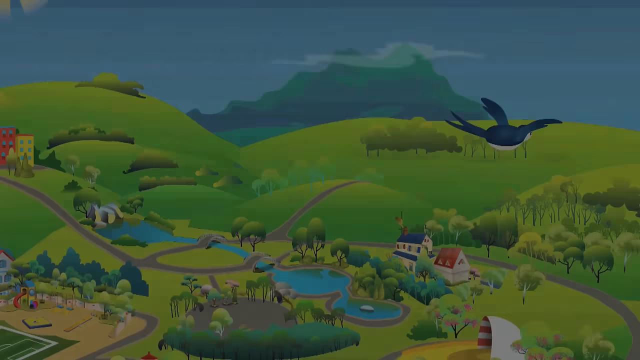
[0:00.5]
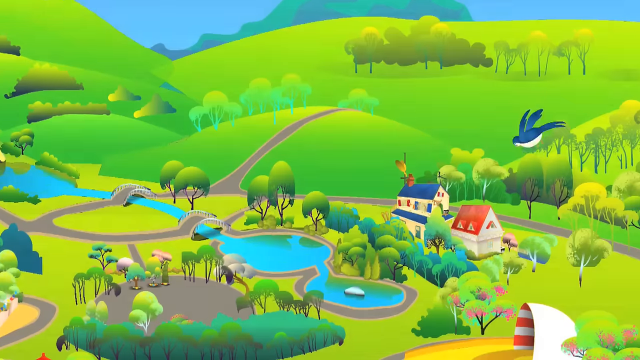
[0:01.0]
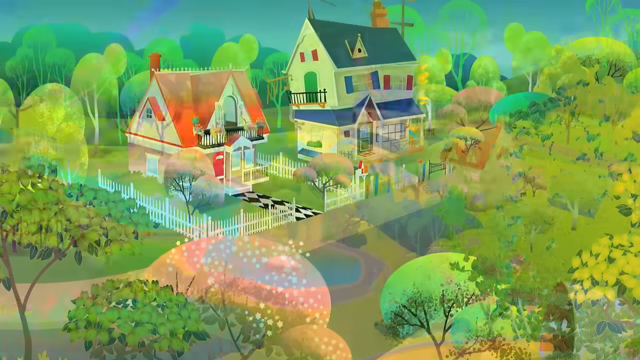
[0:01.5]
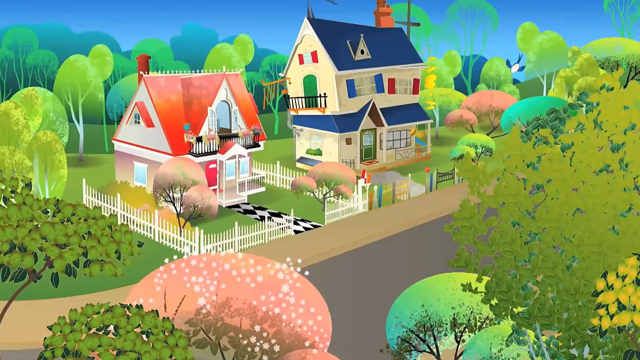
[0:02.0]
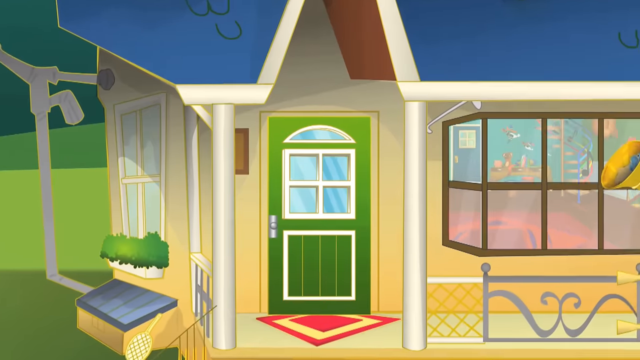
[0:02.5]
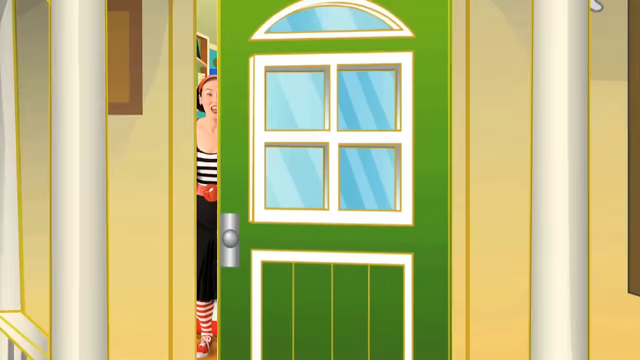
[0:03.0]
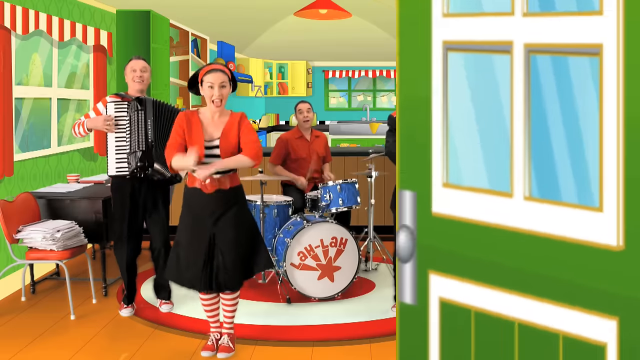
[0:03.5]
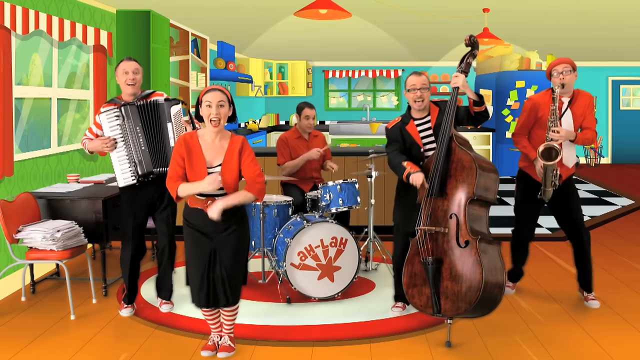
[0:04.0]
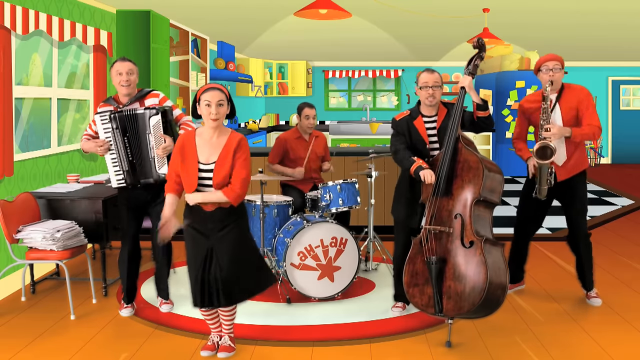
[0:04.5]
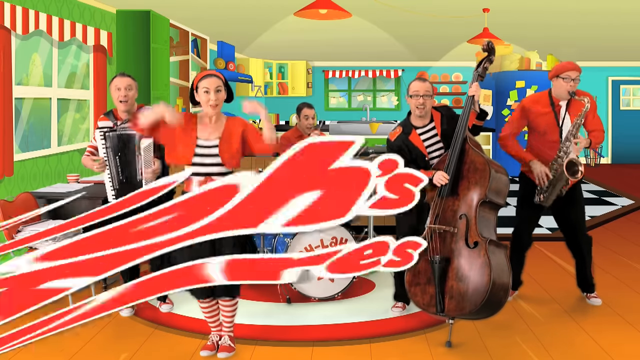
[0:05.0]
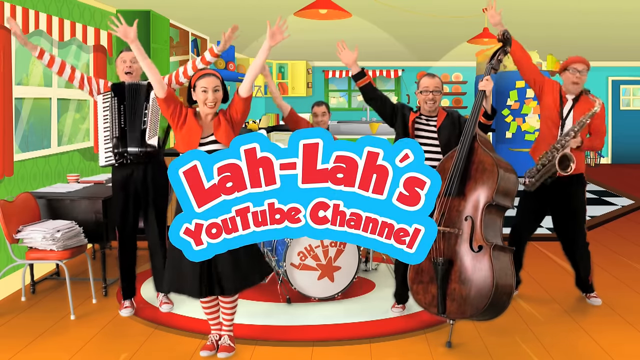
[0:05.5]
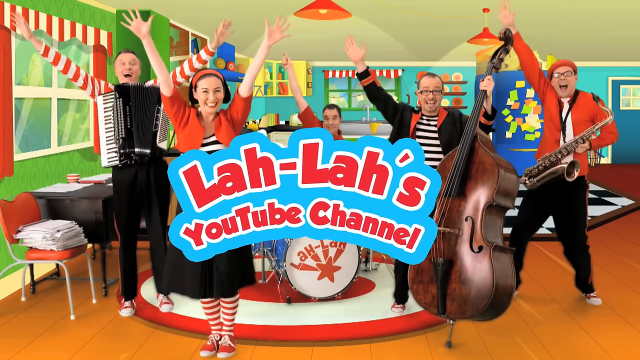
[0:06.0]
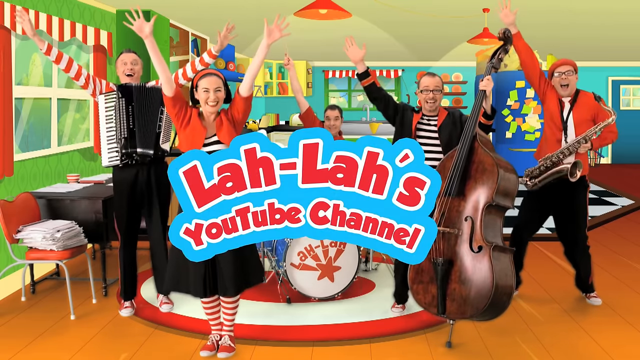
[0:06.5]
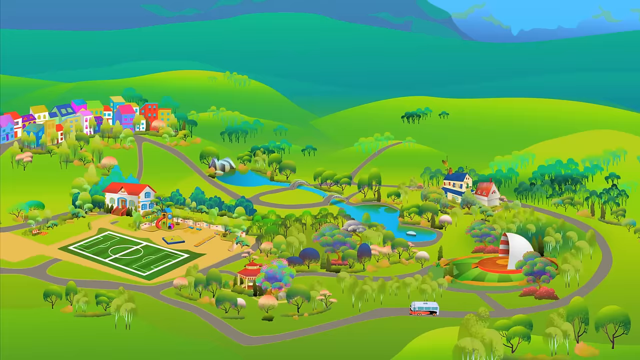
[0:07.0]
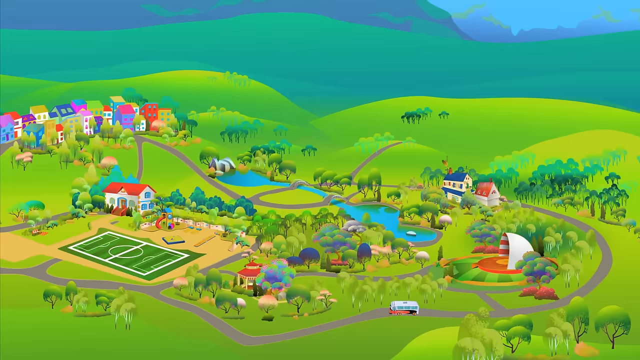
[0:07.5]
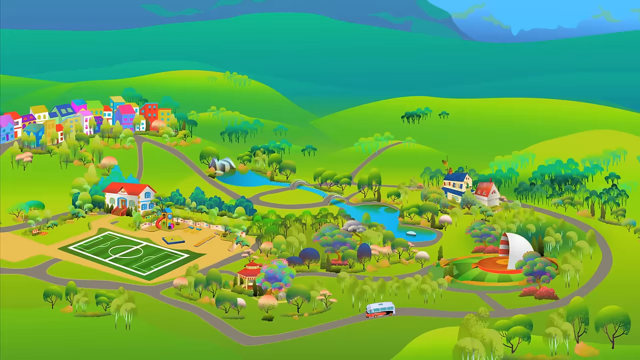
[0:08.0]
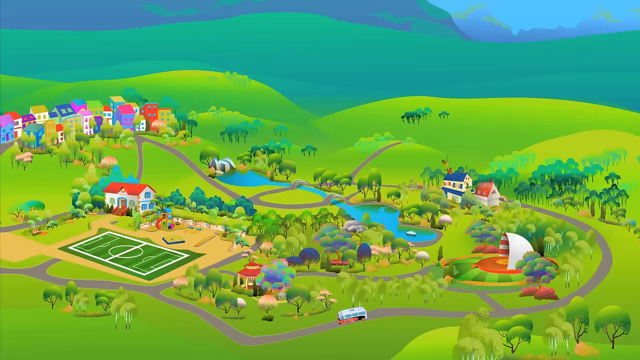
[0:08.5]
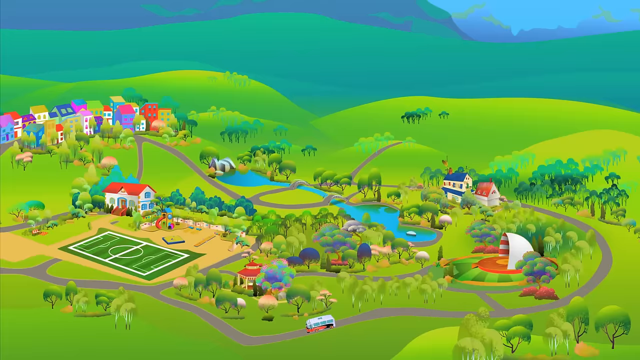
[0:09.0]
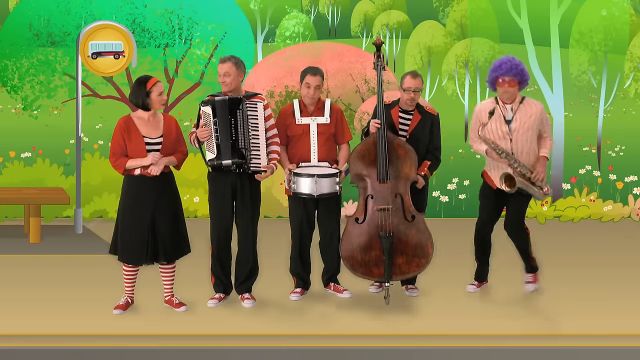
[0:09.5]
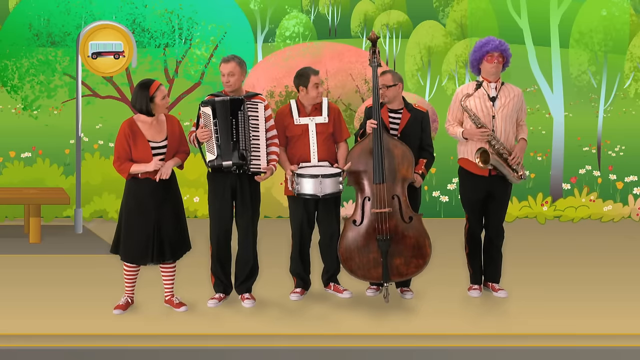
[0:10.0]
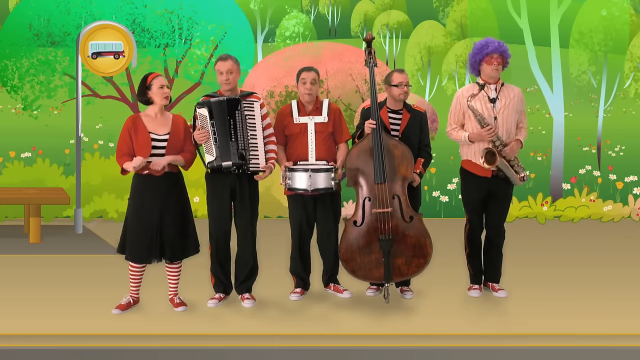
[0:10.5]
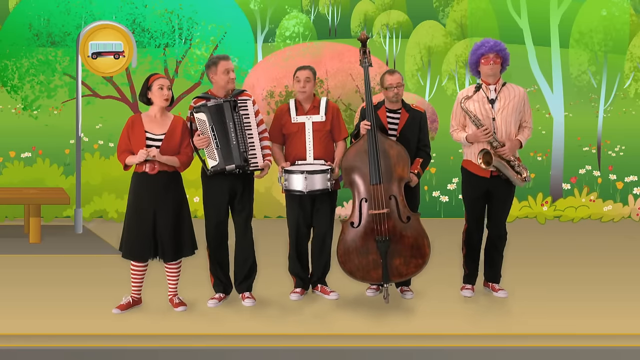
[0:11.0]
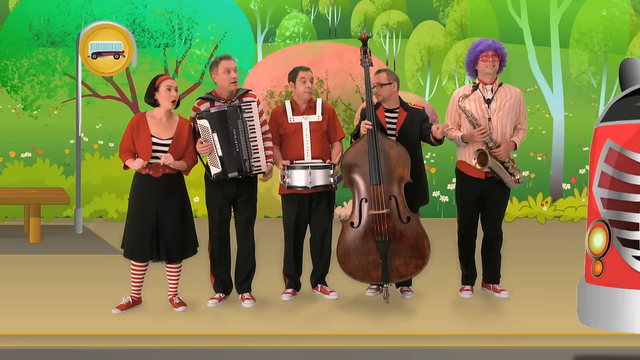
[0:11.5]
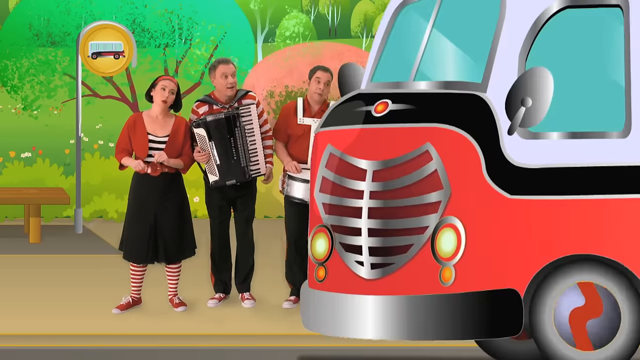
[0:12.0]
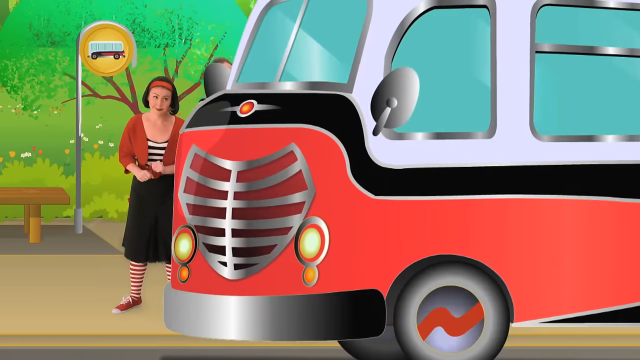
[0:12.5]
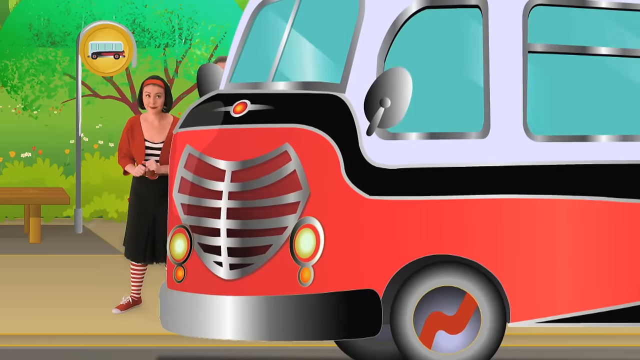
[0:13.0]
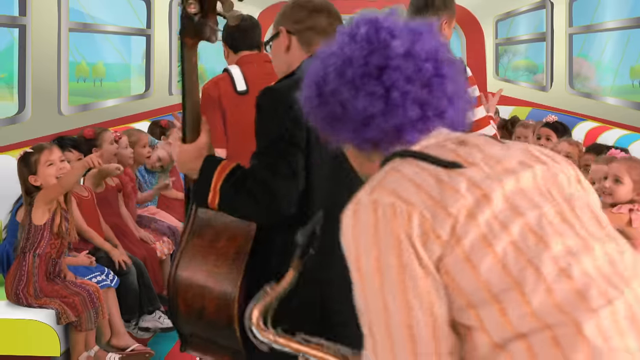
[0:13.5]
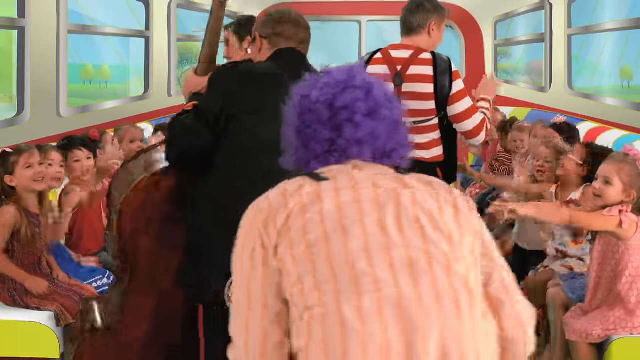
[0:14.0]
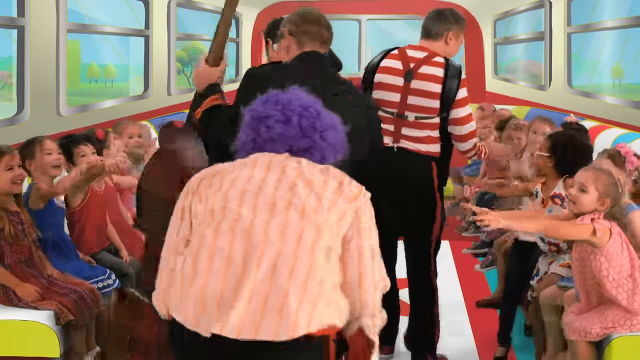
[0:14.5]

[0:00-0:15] What looks like a band appears: one woman and apparently four men. They are set in an animated environment that surrounds them, but they look human-like, or actually human. They are standing at a bus stop and get on a bus with a bunch of children, who are not animated either. The text "Lala's YouTube channel" seems to repeat over and over, so this looks like an intro to the band, apparently called Lala. The bus drives through a town with a lot of green, and some water is visible. A blue bird is followed down to a house; the door, which is green, opens, and the band is inside one of the buildings playing. Their instruments are a saxophone, a cello or a bass, drums and an accordion; the woman has no instrument, only the men do. On the bus the children are seated and the band is in the back, sitting down and talking to each other, with the same instruments as before. One of the musicians gets up and sits among the children: someone in a purple wig that looks like a fro, with glasses, holding the saxophone, possibly the same man as the saxophone player. The people look very cartoony even though they are humans.